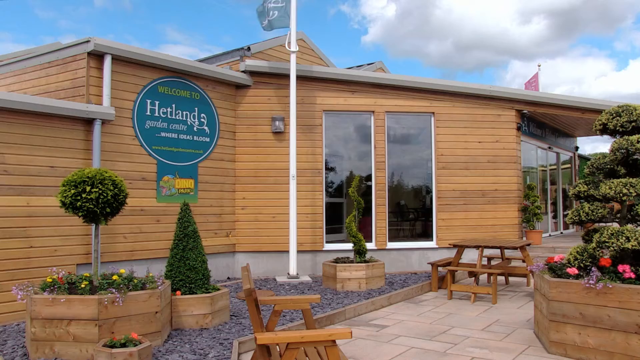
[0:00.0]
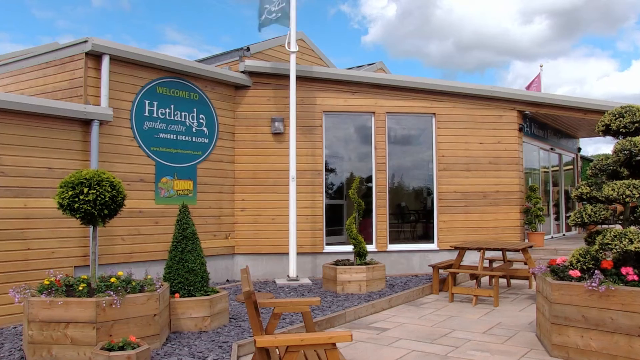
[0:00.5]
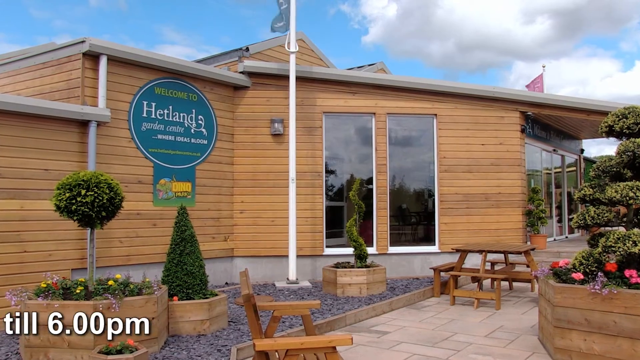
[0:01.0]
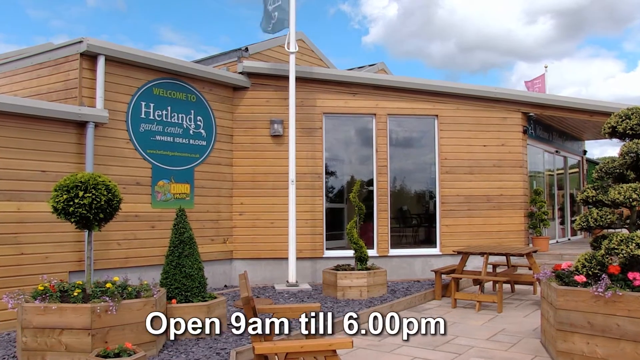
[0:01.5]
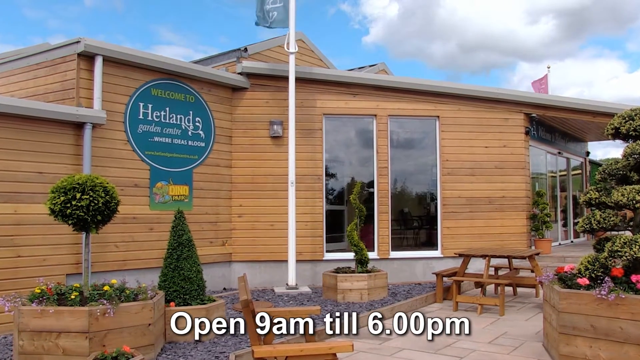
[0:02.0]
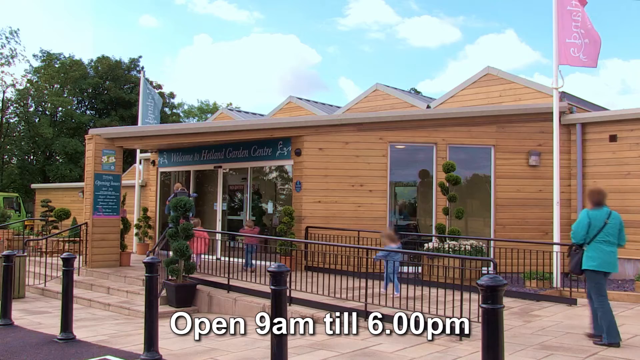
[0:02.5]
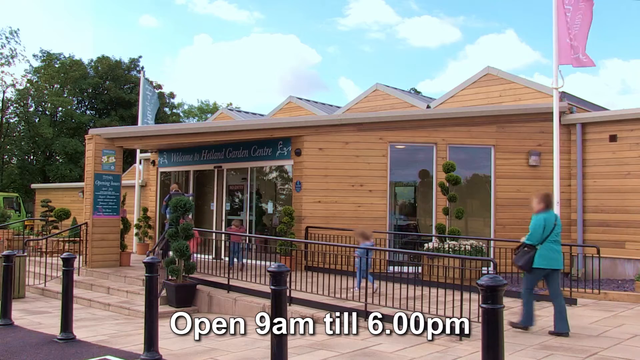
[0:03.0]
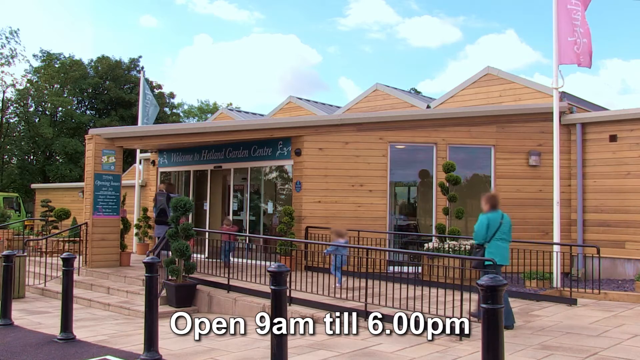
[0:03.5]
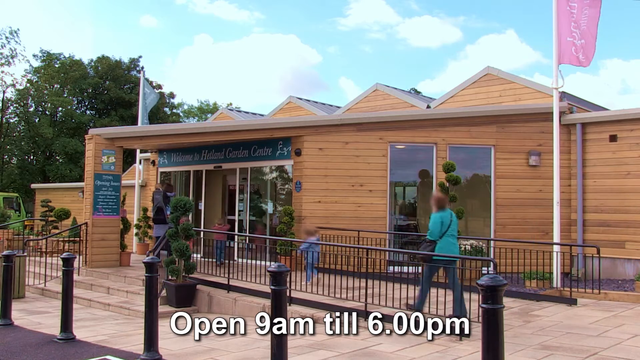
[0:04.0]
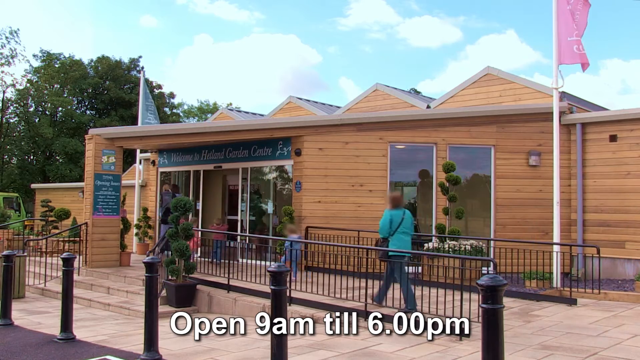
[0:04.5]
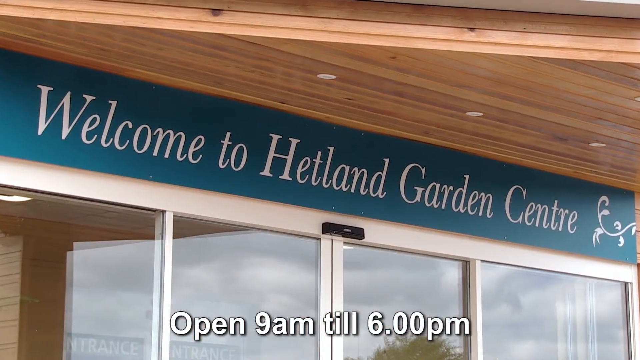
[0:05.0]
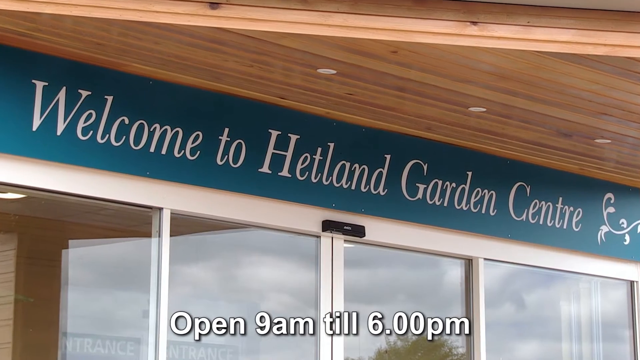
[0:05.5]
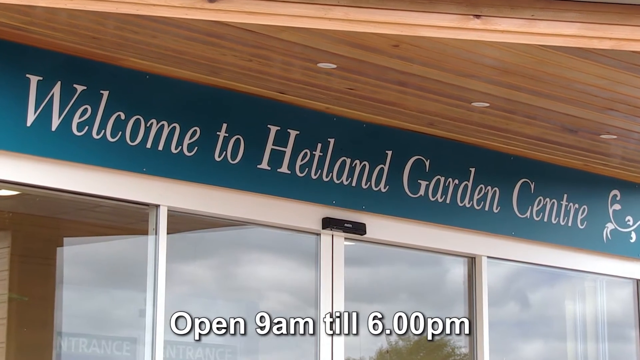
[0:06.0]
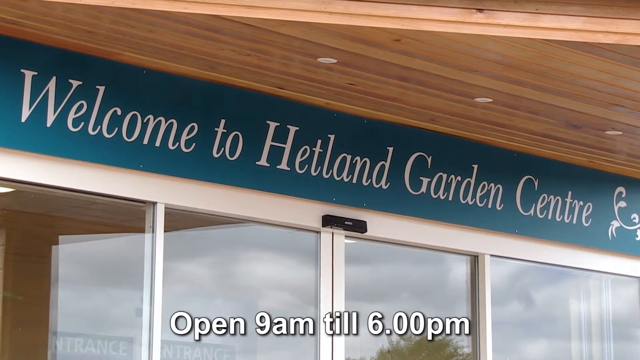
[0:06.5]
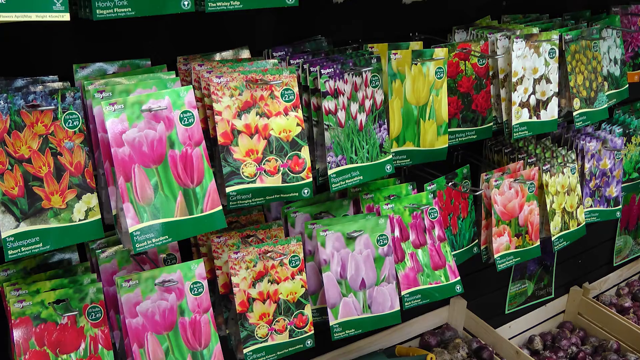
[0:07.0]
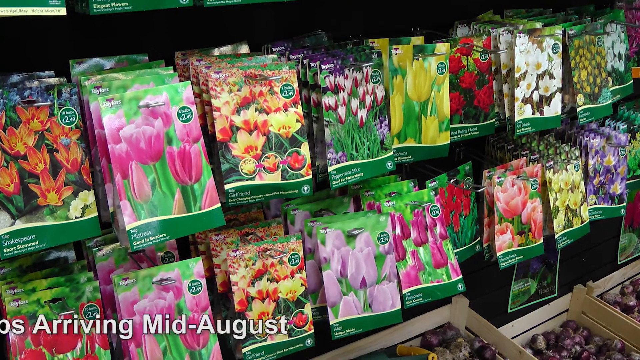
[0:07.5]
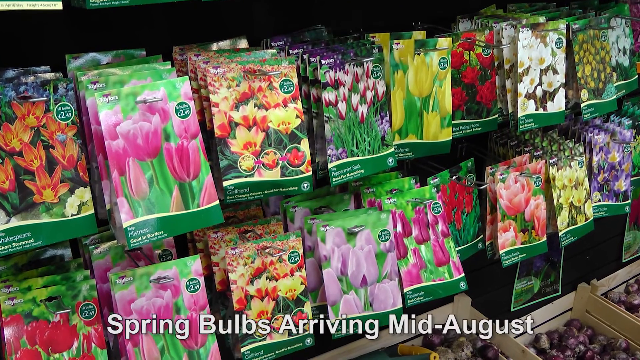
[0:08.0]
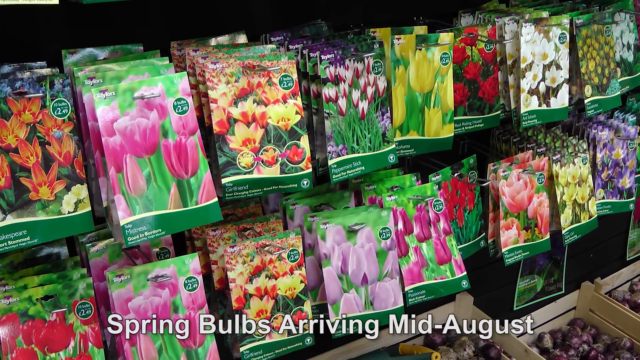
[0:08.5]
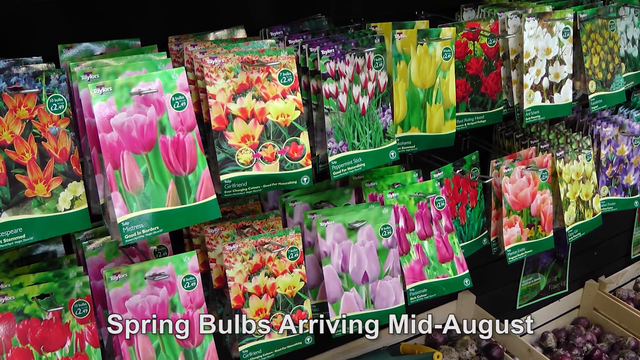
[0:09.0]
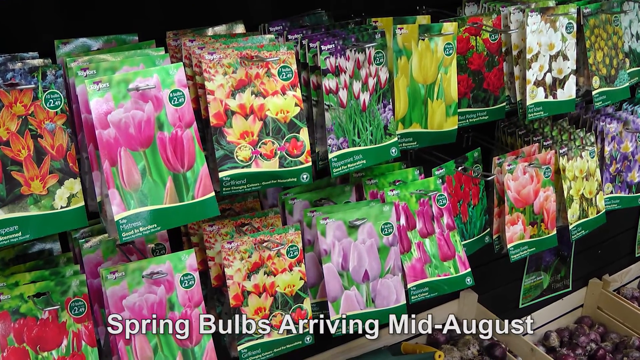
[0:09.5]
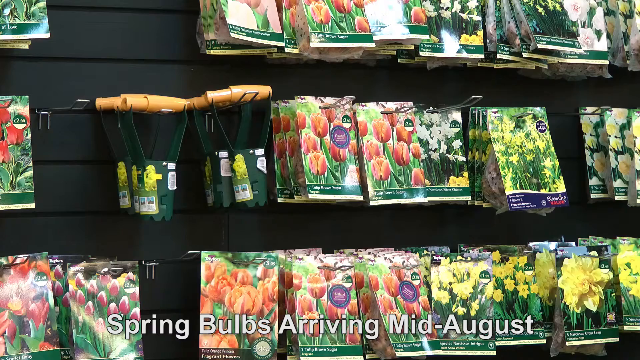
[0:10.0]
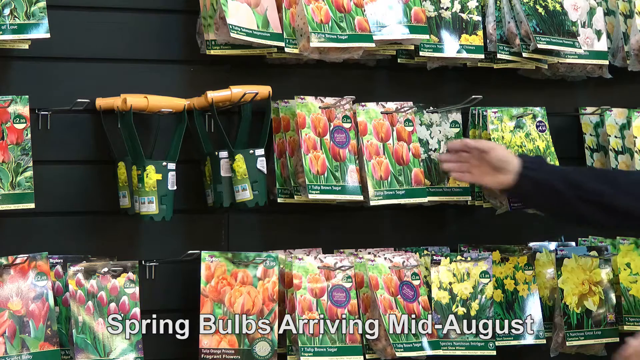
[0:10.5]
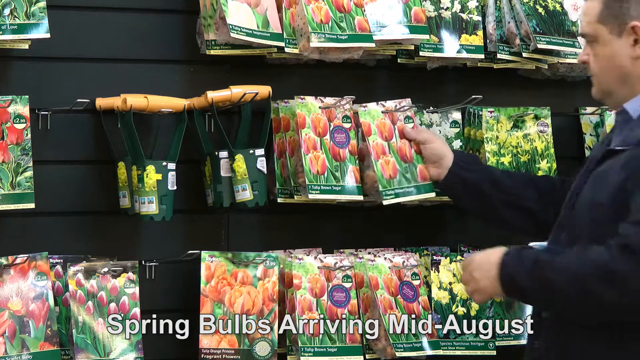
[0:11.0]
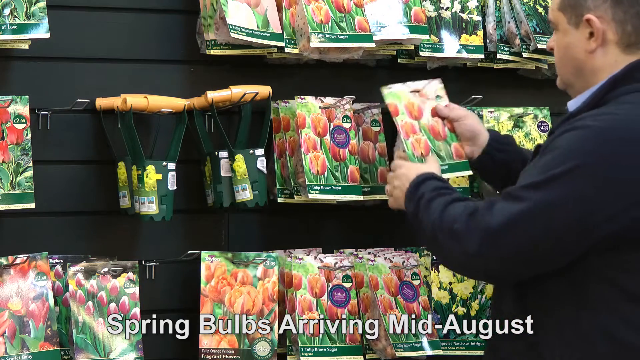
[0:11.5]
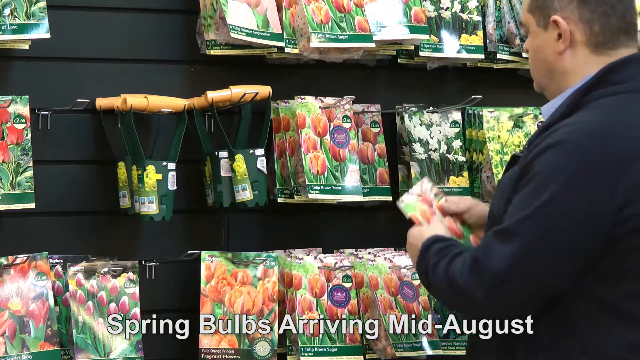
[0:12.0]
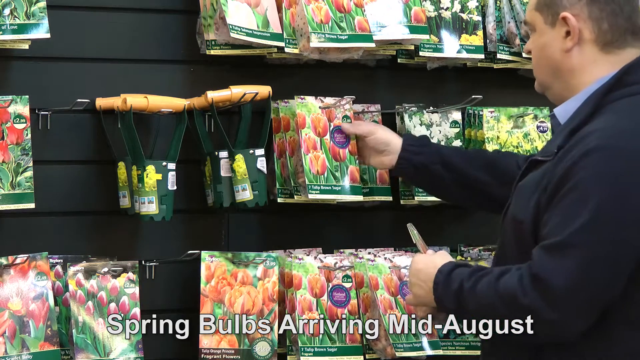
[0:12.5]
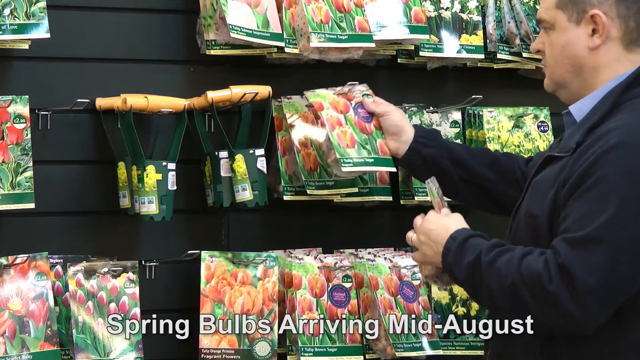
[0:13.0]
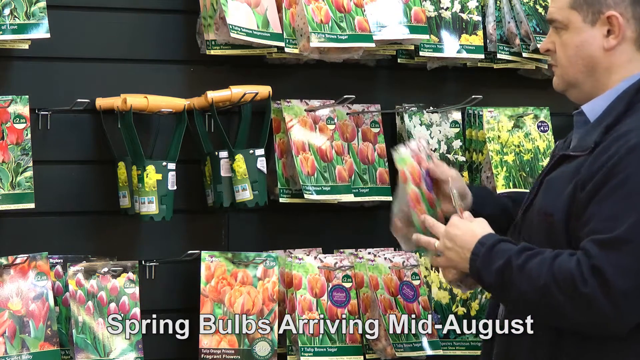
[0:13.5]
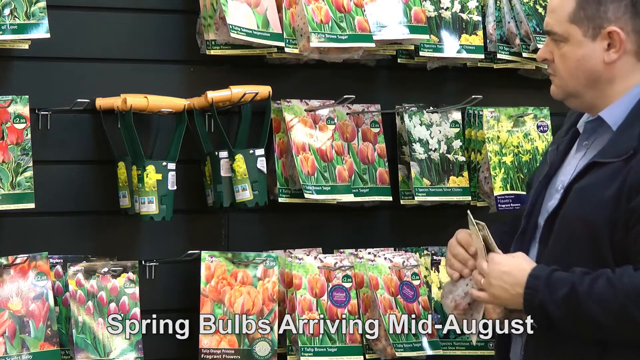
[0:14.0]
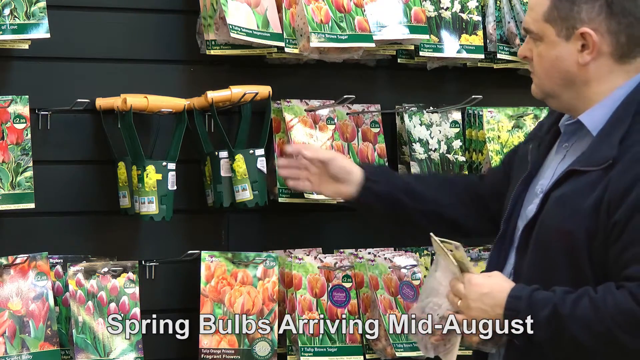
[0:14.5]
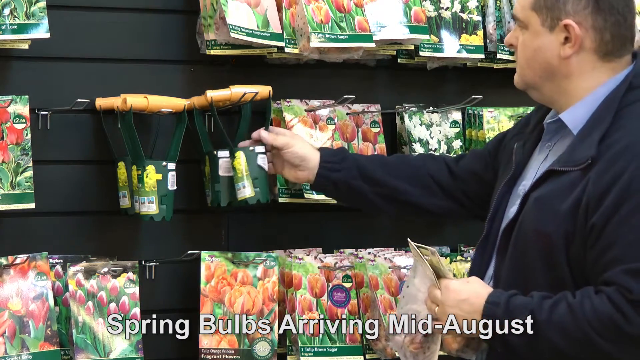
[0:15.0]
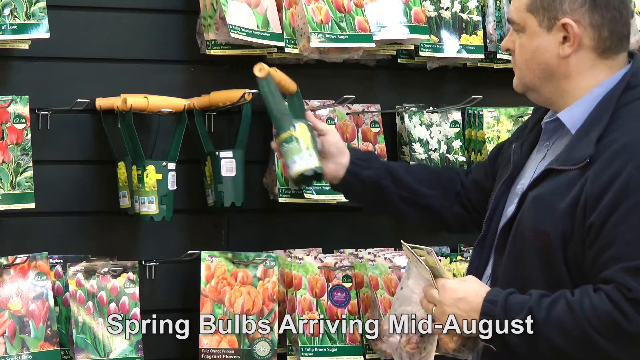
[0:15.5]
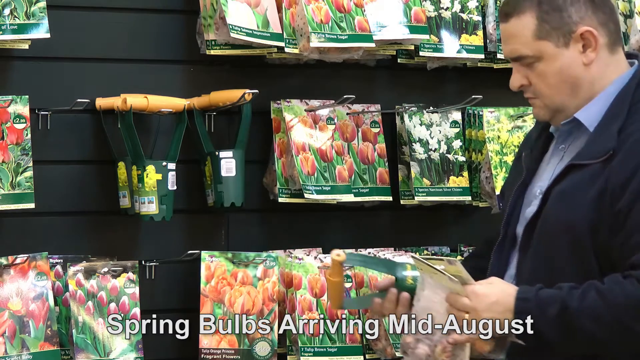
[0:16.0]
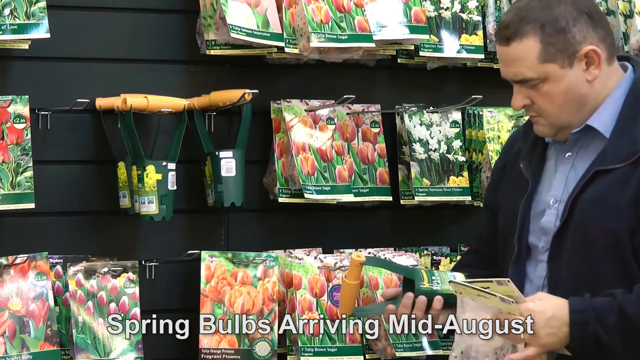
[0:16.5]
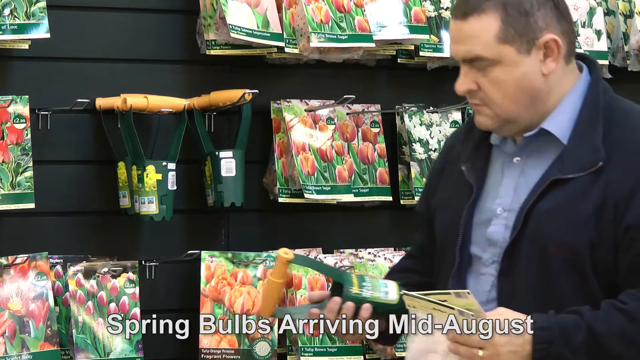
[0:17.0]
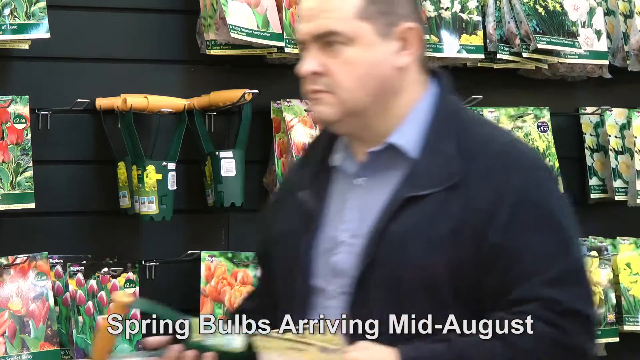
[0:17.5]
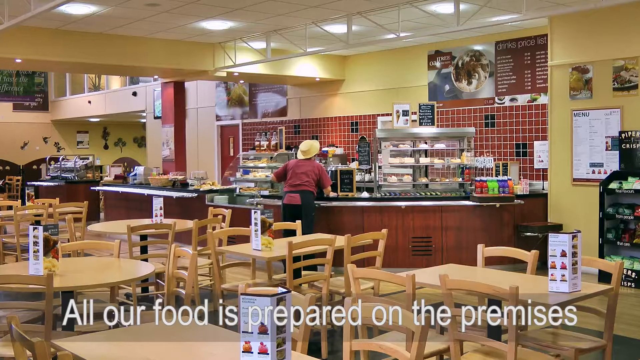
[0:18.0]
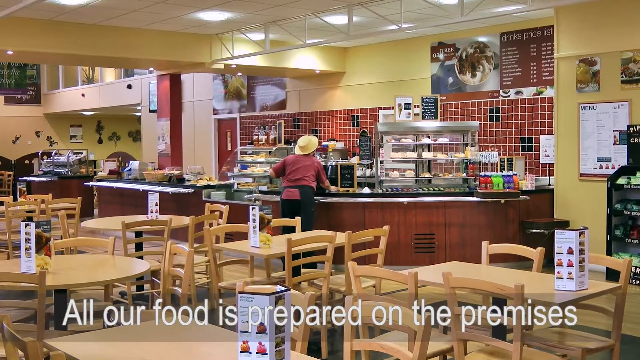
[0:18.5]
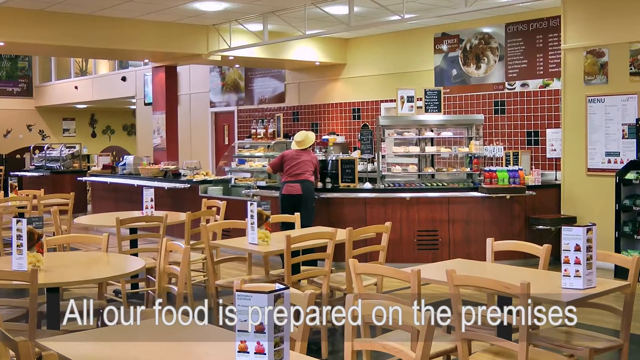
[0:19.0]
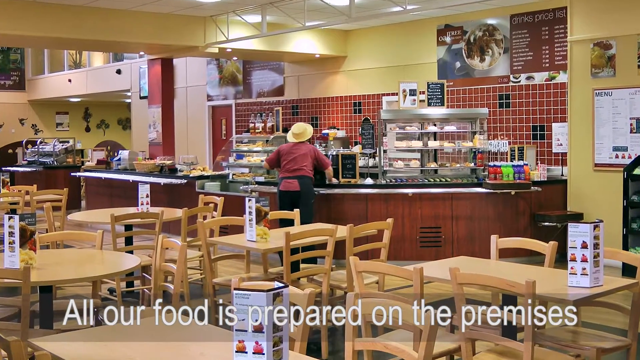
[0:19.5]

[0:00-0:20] A miniature Christmas tree and a palm-tree-like plant are shown at a garden. The building has two rectangular vertical pieces of glass, and there are many trees and flowers, with brown, wood-colored tones. The sky is blue with a few clouds, and it is windy, with flags waving in the wind. A close-up shows a sign with white lettering on a blue background reading "Welcome to Hetland Garden Center"; the place looks like a store. Spring bulbs arriving mid-August are shown in many different colors, with lots of greens and purples; the packages have a green background, while the flowers are pink, purple, orange and red. The camera pans closer, and a man in a bluish suit picks two of them off. The view then moves to another room with ten chairs and tables and a kitchen-like area slightly in the middle of the screen with red and blackish brick. There is a bunch of stuff on the table, and a customer wears a tan hat, a burgundy shirt and black pants.